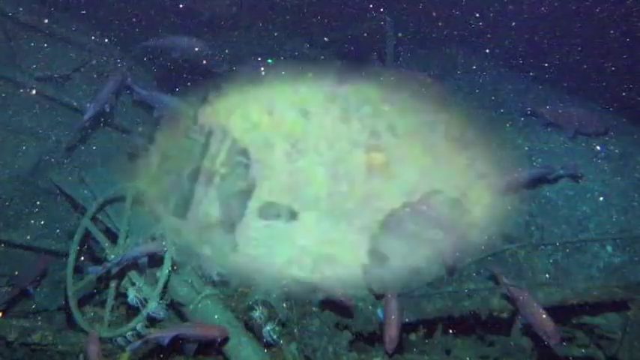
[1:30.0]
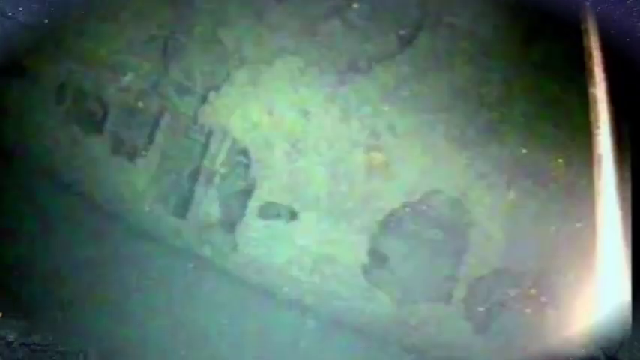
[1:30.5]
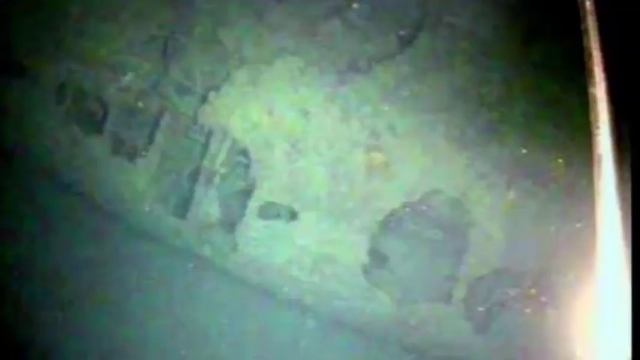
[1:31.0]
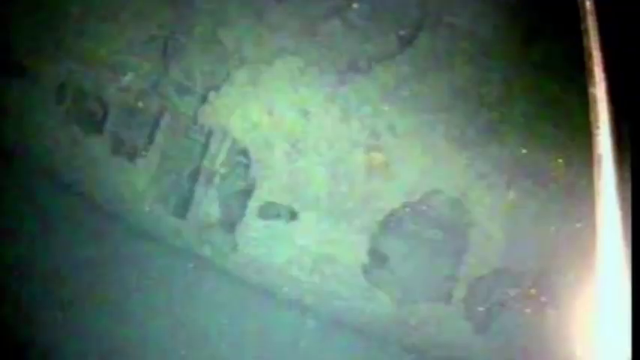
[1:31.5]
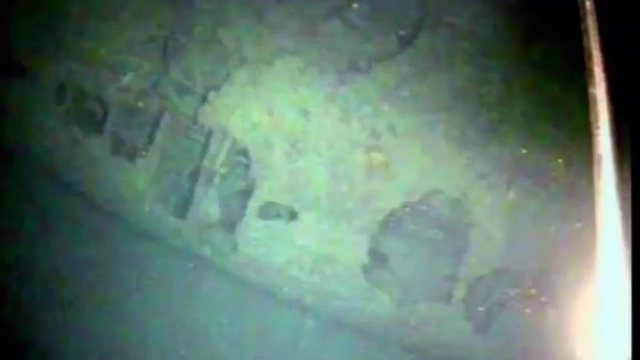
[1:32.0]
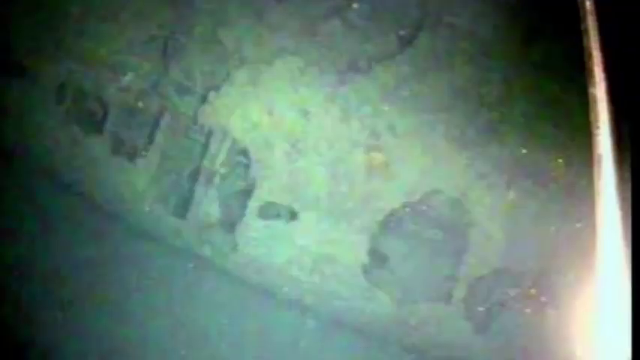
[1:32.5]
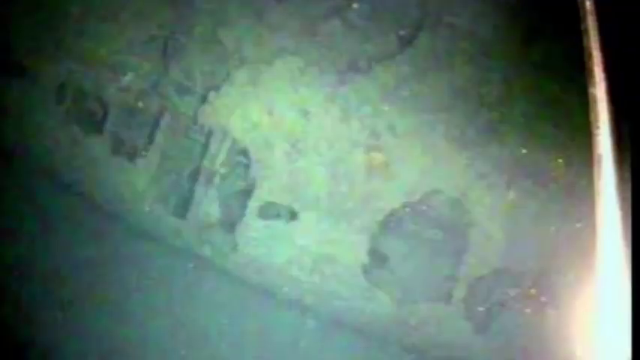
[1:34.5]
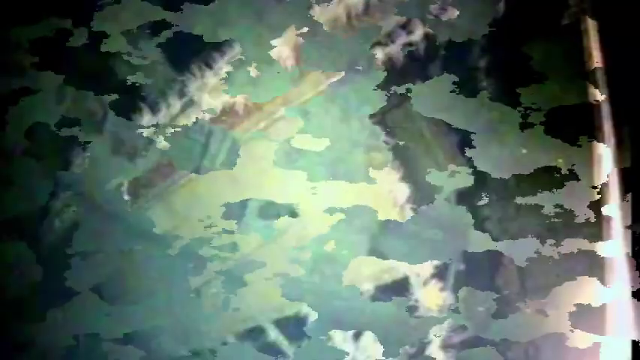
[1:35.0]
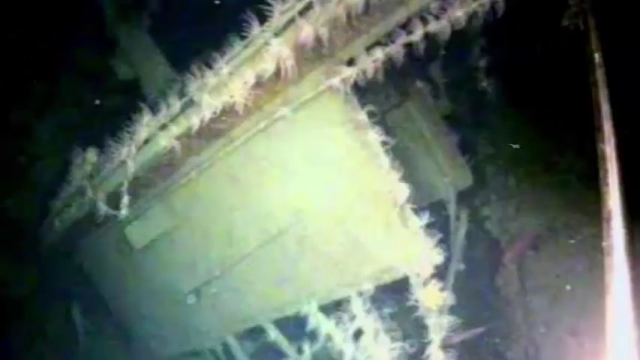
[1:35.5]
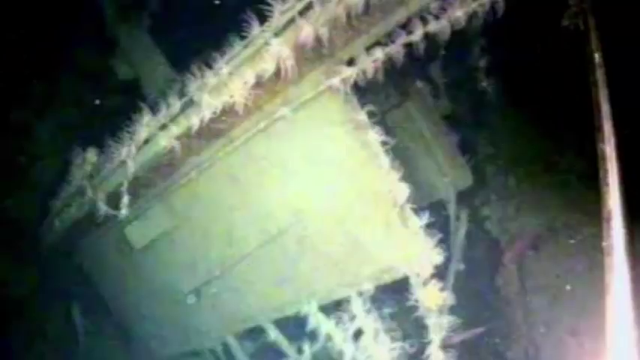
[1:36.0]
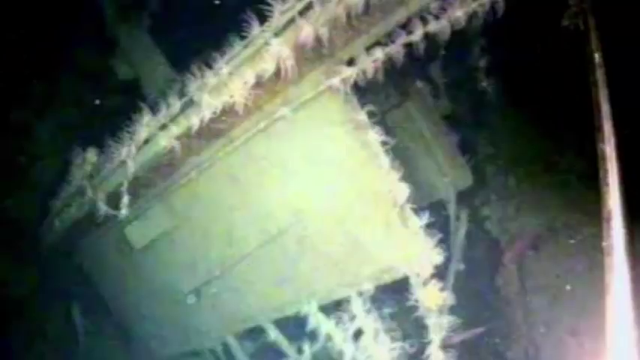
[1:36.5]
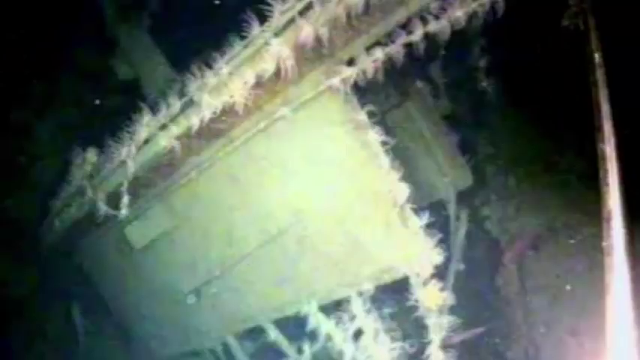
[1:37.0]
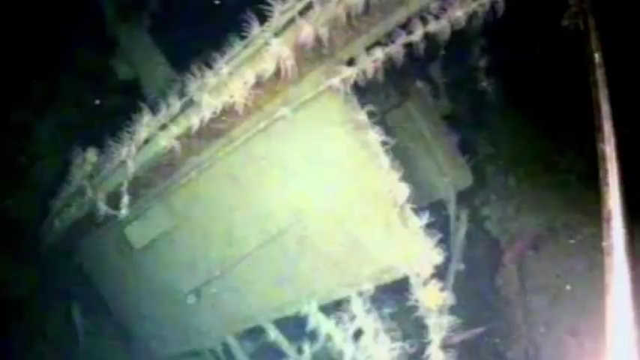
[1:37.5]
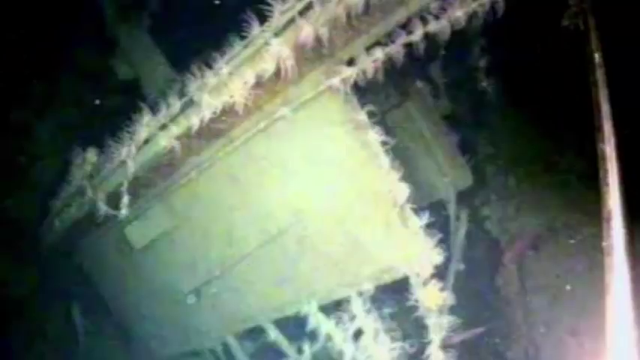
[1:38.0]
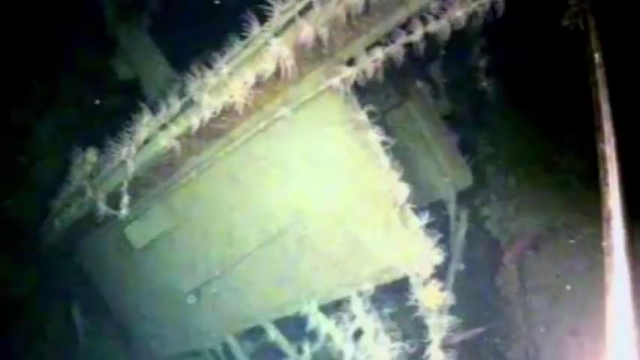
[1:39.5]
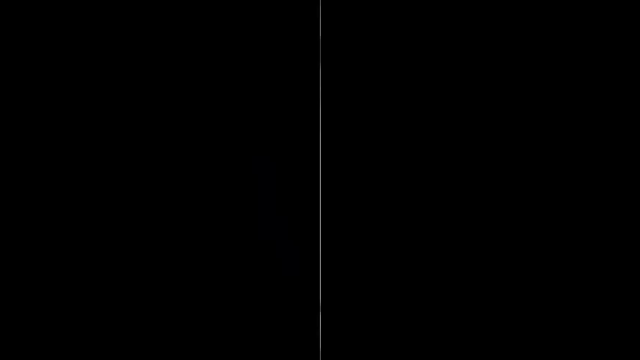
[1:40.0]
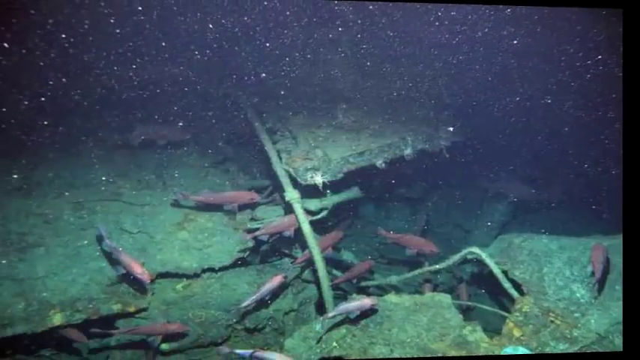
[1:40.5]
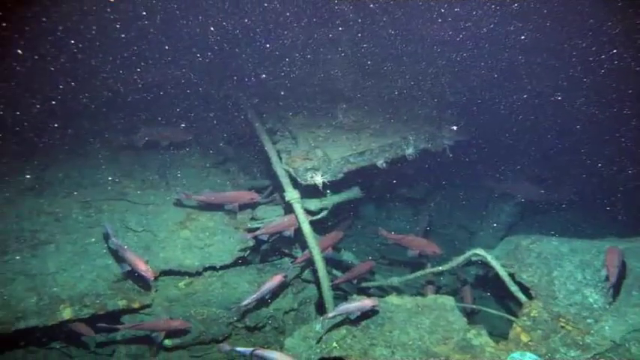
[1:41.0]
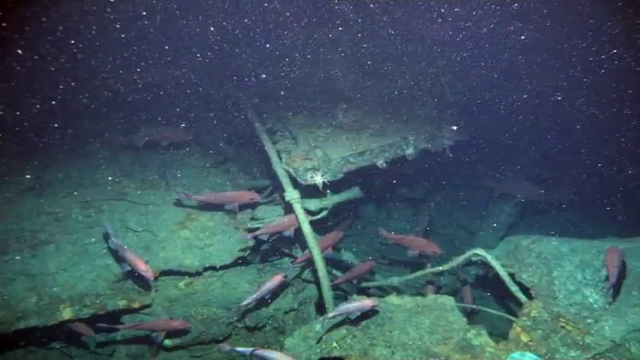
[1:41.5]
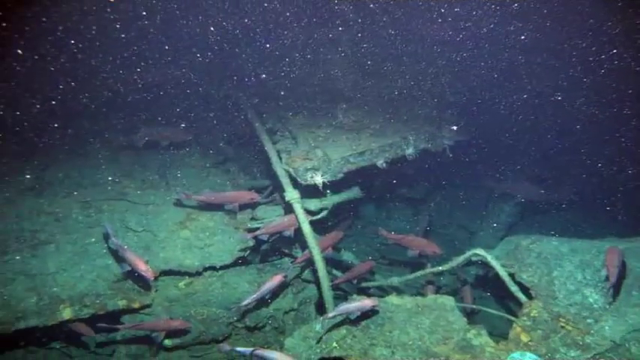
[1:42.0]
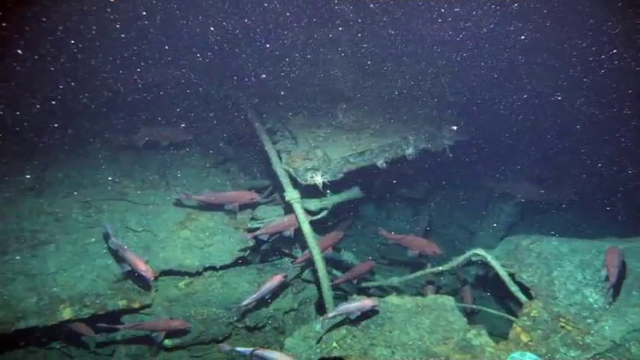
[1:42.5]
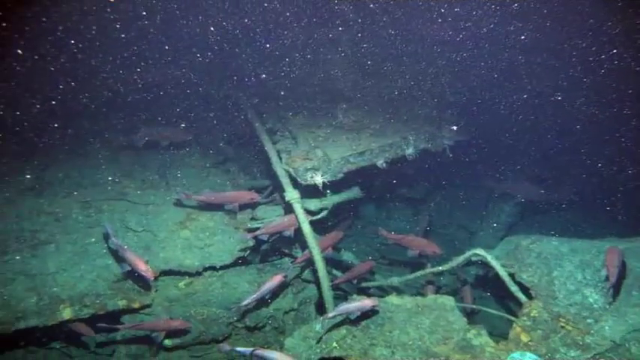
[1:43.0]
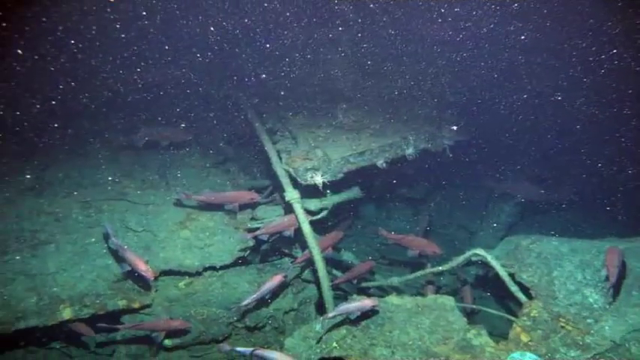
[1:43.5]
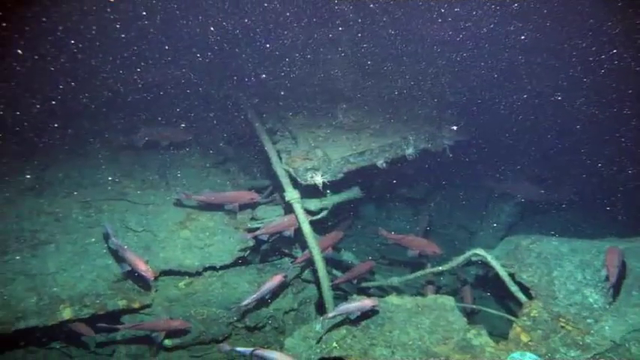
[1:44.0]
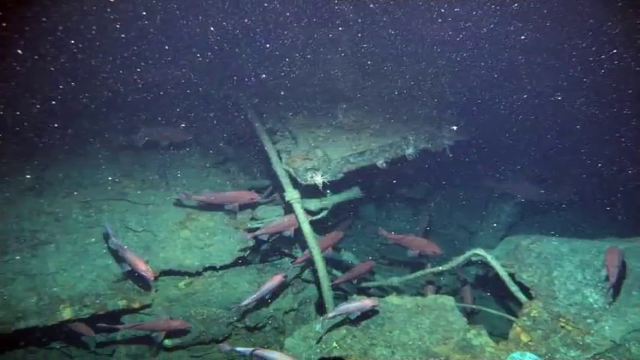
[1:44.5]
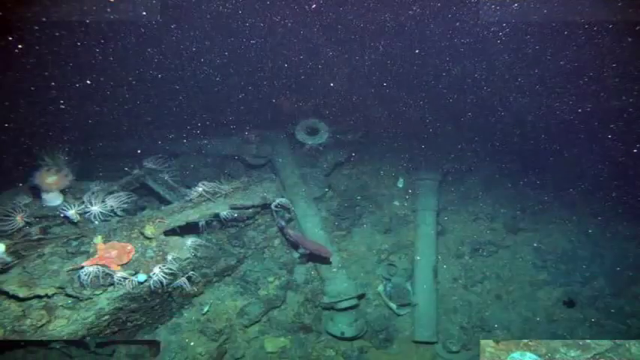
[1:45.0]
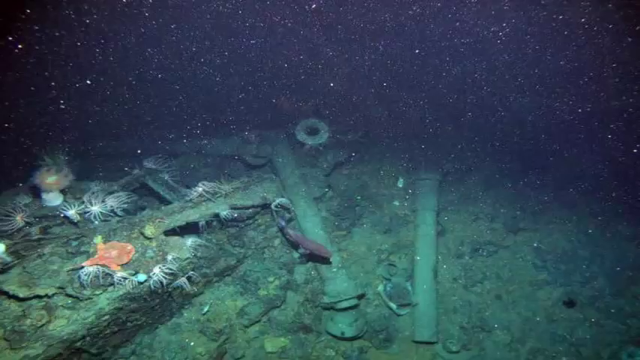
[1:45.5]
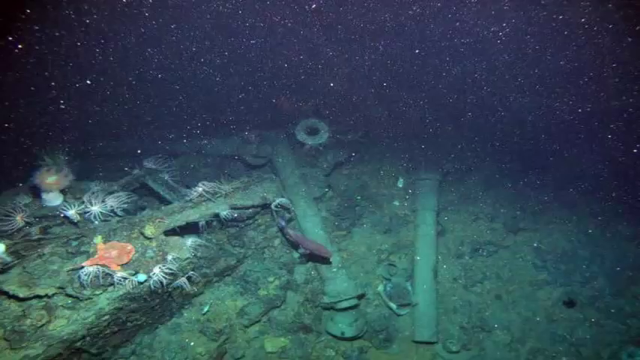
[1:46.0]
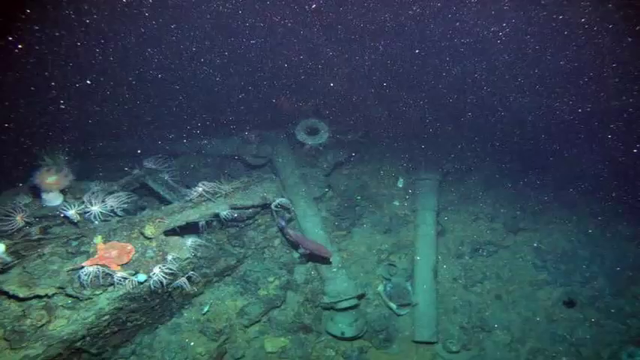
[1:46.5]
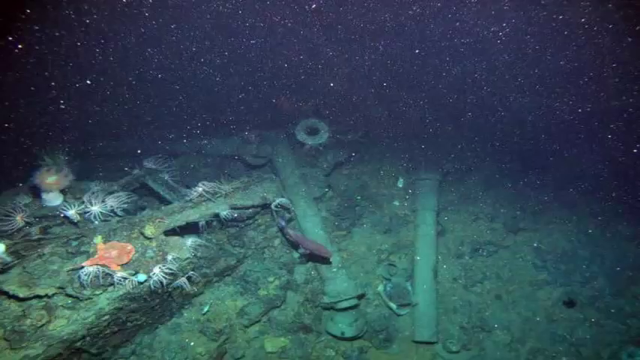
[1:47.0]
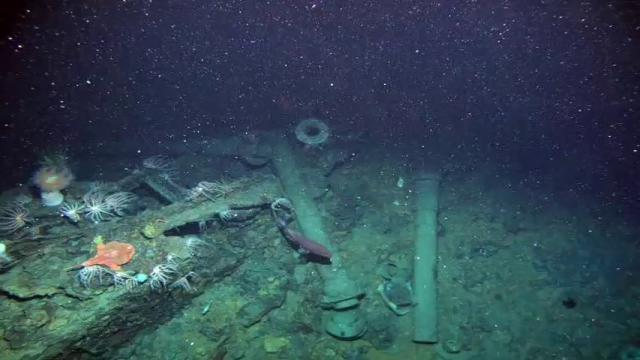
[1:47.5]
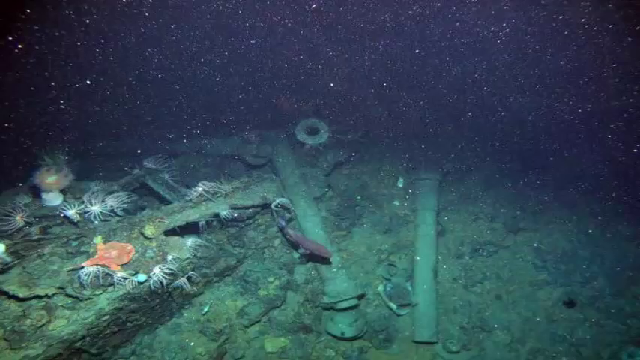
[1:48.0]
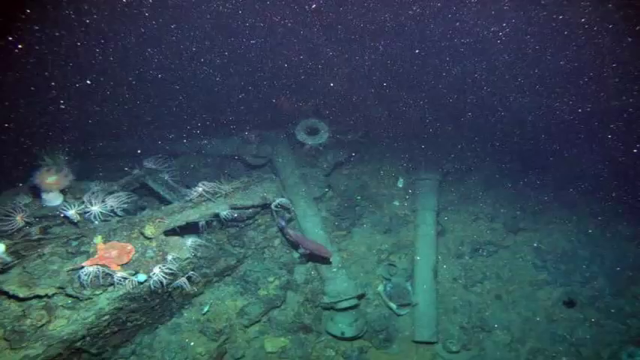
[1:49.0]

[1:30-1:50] The image with the bright light appears again, the light creating a spear-like point at the right side border of the screen, while a helmet-mounted camera illuminates the center of the screen, showing a boat wreckage on the sea bottom with vertical trusses in the left half of the screen and significant overgrowth of ocean organisms, including barnacles and other rocky textures, along the entire boat. The corners of this image are black. An animation then shows the same image again of the vertical structure connecting the center of the left border to the center of the top border, filled with spider-like growths covering the entire length of the poles and creating a feather-like effect. The screen flips to another image of the wreckage, then transitions to a different image showing the poles, the dark ocean backdrop, and the spiny, scaly ocean floor and wreckage site.